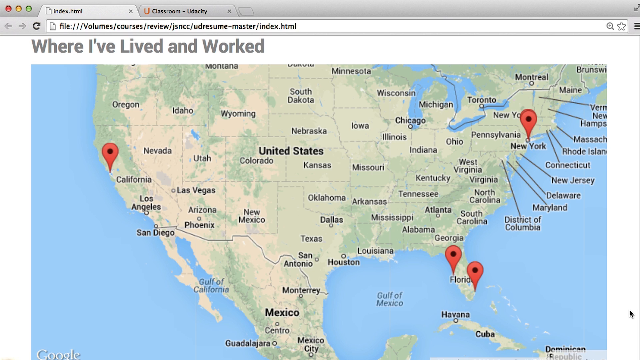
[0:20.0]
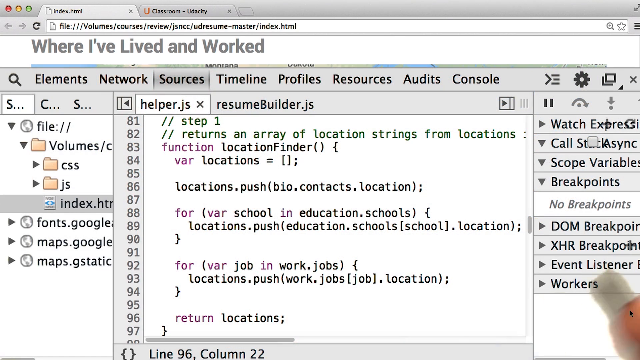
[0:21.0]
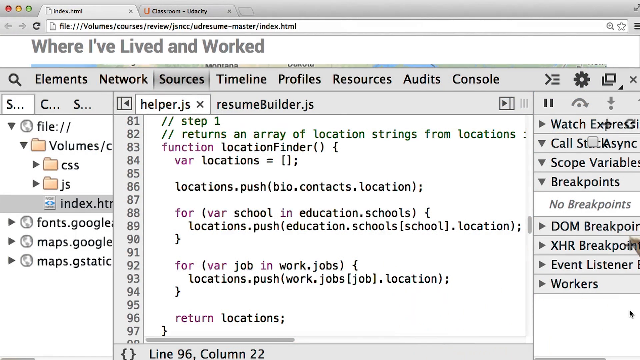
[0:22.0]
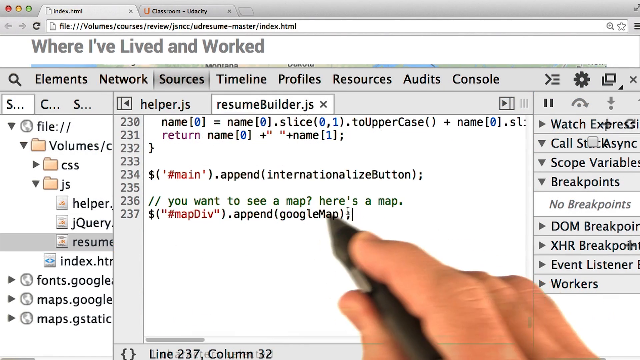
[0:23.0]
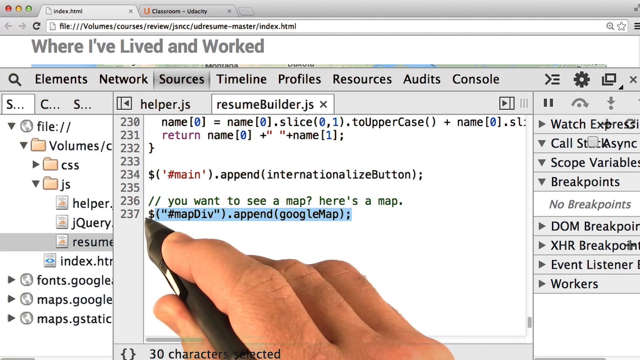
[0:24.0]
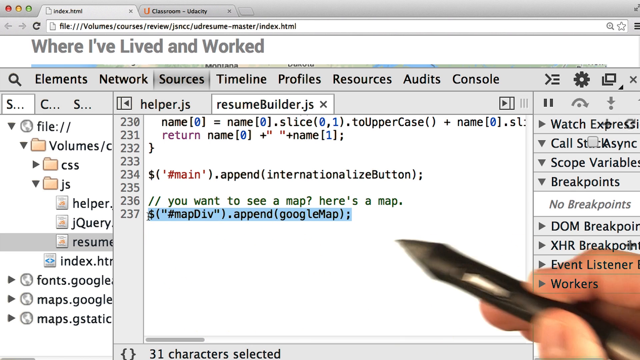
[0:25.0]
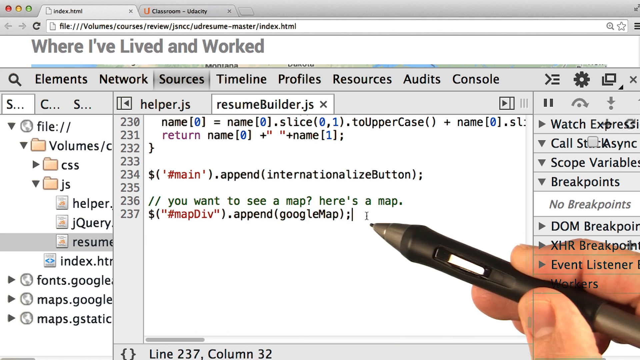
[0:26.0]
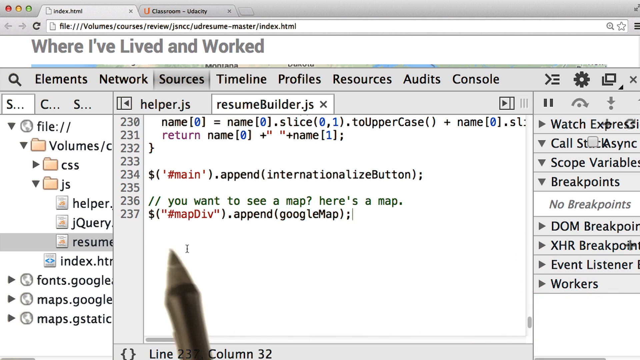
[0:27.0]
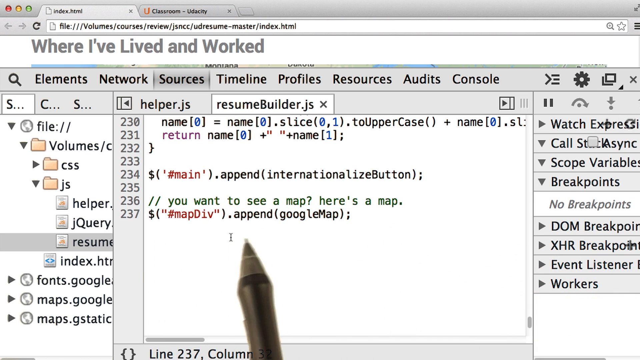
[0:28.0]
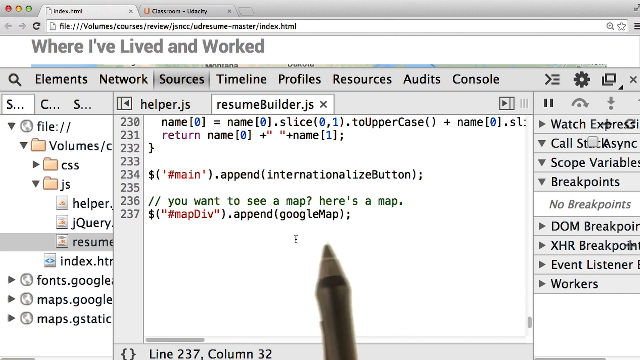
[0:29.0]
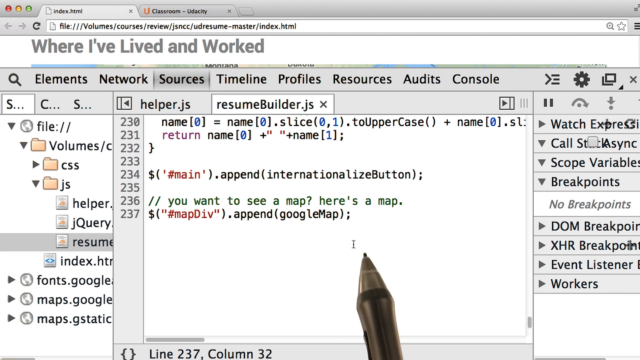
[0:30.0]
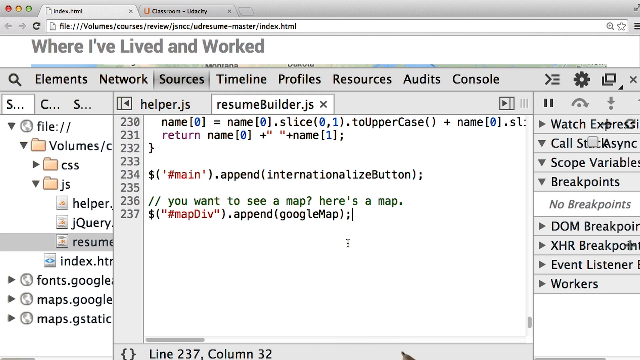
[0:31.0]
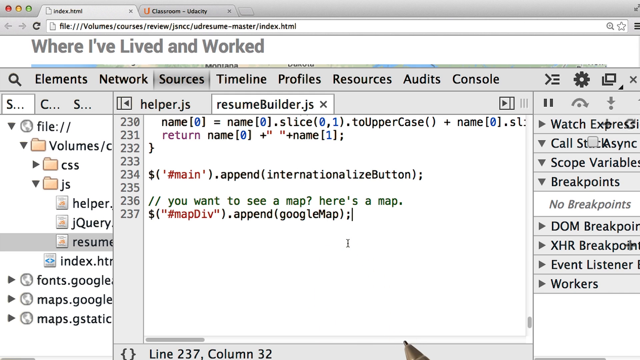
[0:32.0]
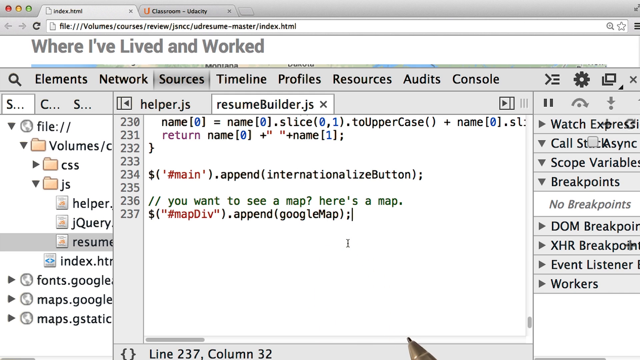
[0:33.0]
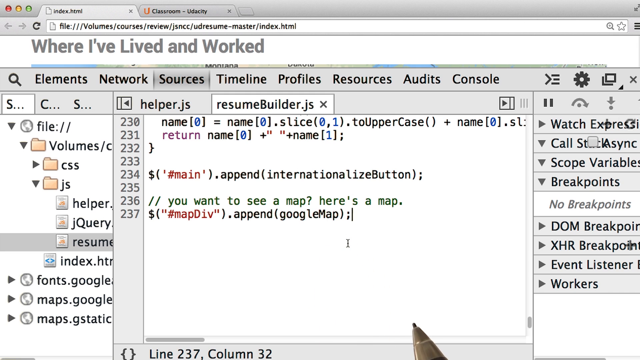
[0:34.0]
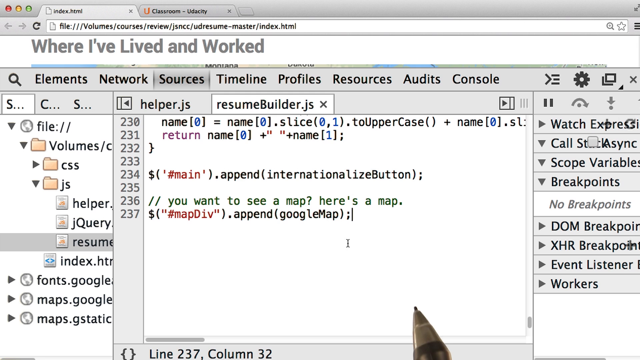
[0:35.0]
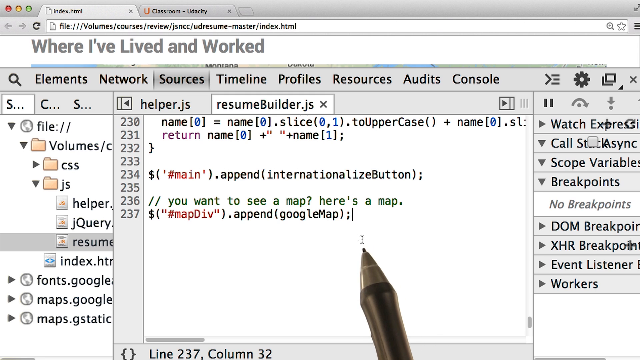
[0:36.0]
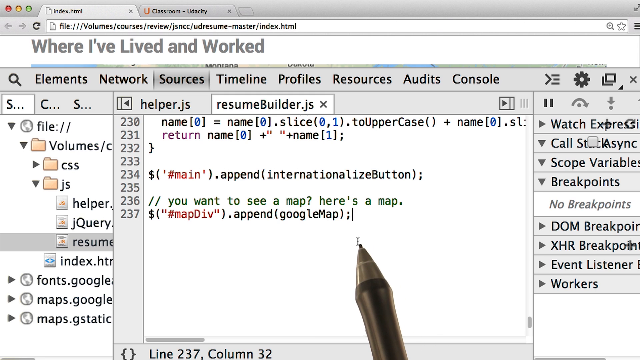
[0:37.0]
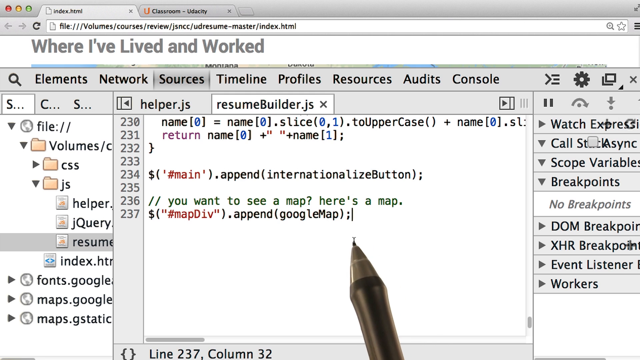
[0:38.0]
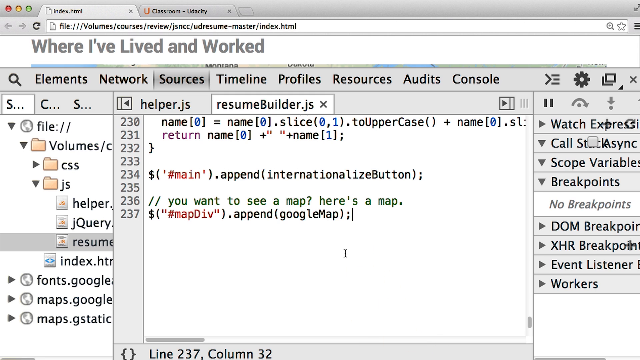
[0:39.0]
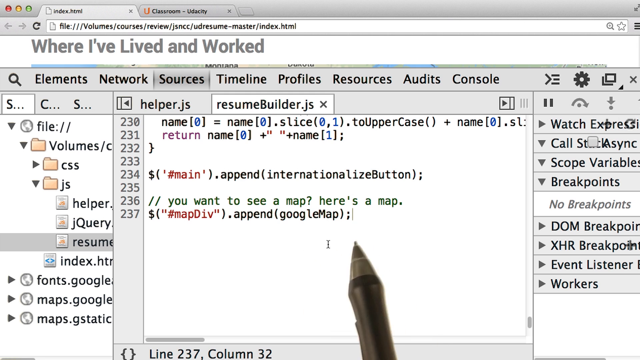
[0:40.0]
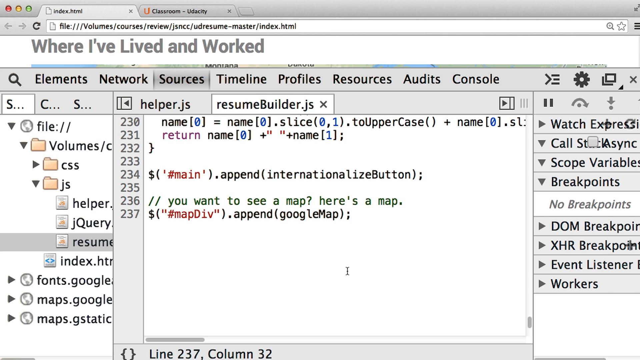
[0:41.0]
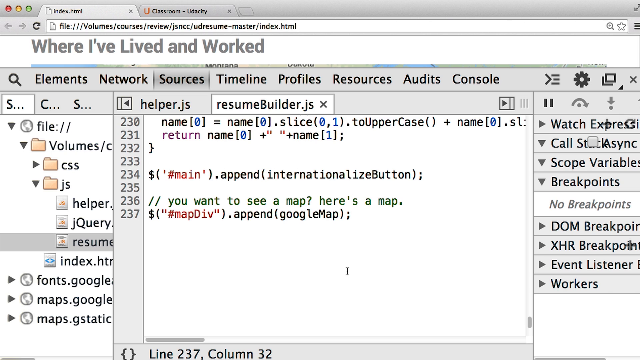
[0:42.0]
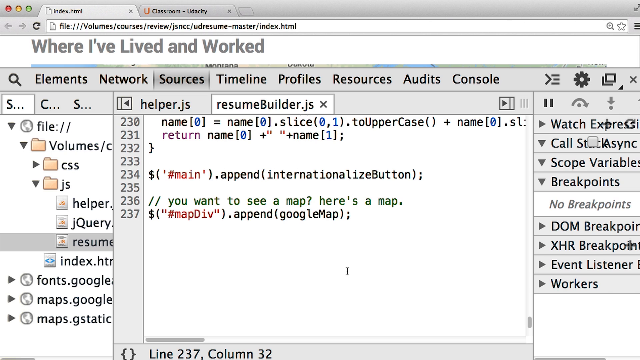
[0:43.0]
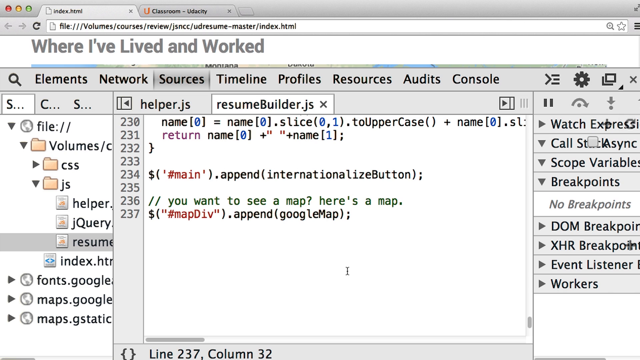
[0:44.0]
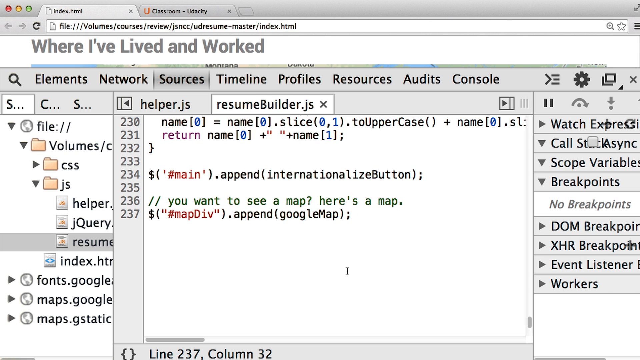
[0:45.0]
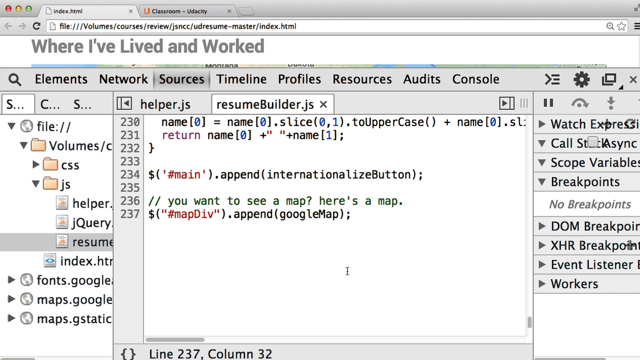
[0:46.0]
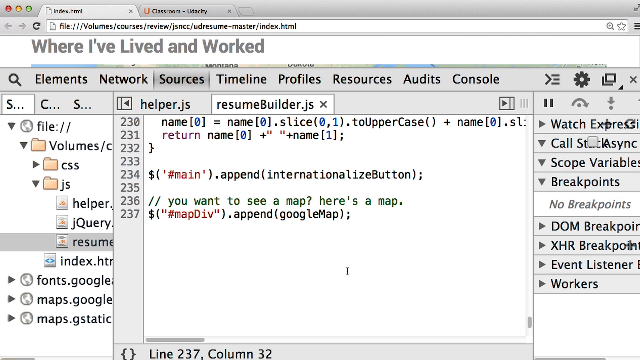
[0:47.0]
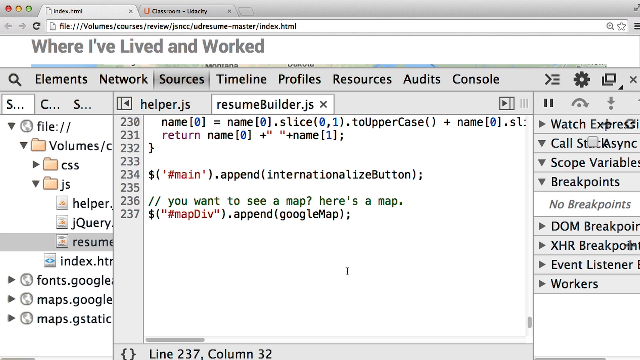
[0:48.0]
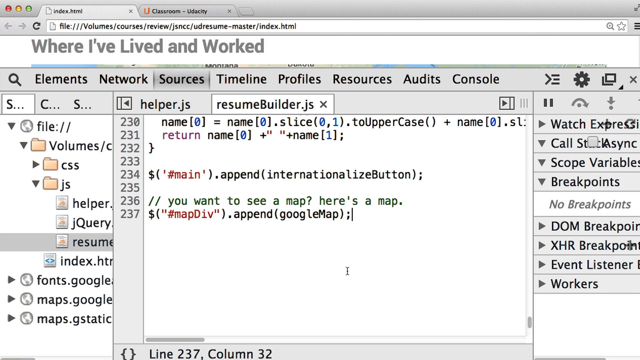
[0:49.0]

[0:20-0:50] A map of the US has pinned areas: one in California, one in New York and two in Florida, and the text reads "where I've lived and worked". Then a screen with some technical elements pops up, reading "resume builder". A pin appears, and someone's hand is visible as they kind of highlight some areas, particularly one that mentions Google Map, which turns blue on line 237. The hand moves the pin back and forth while it appears to be referencing line 237 with Google Map. The pin disappears, then briefly reappears to kind of point at Google Map, where the text cursor is still flashing, while the mouse cursor is below it on the white screen.